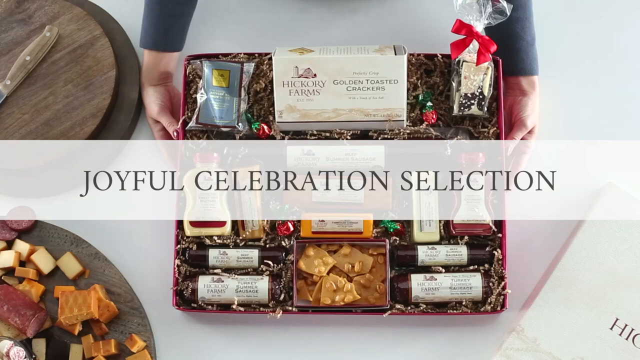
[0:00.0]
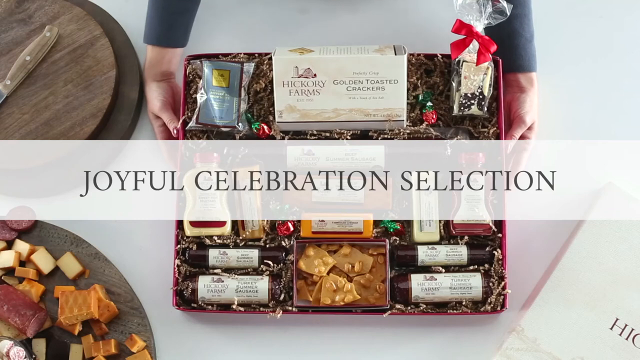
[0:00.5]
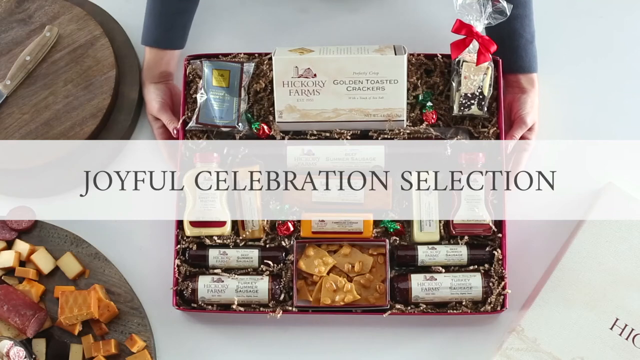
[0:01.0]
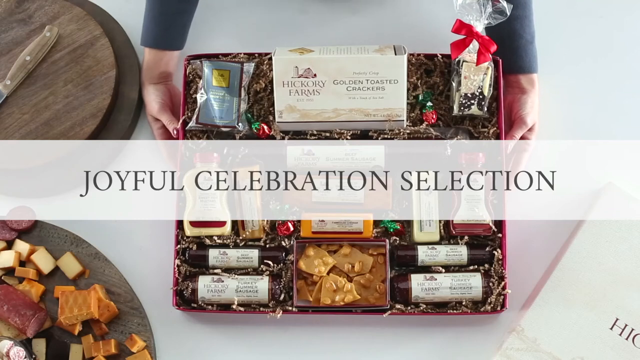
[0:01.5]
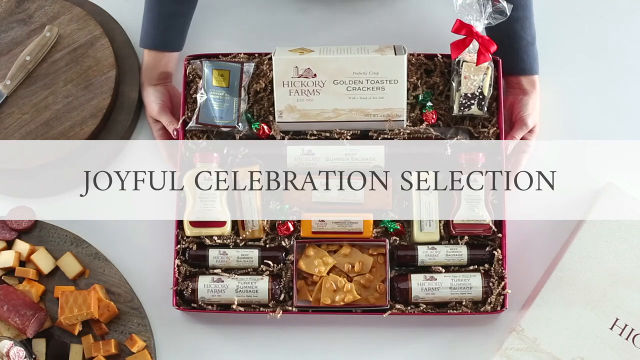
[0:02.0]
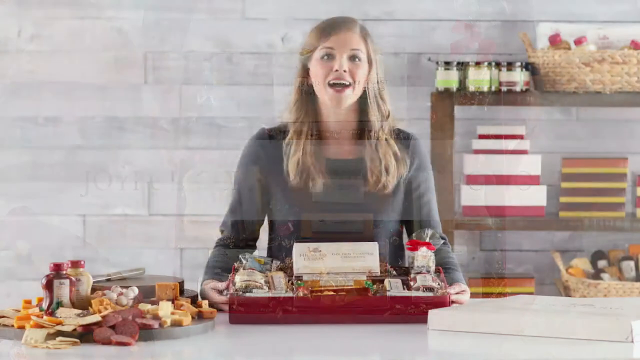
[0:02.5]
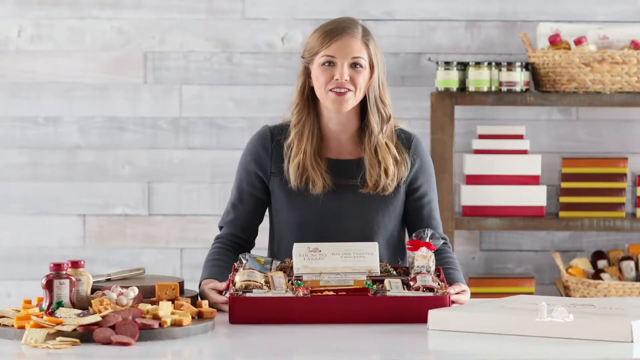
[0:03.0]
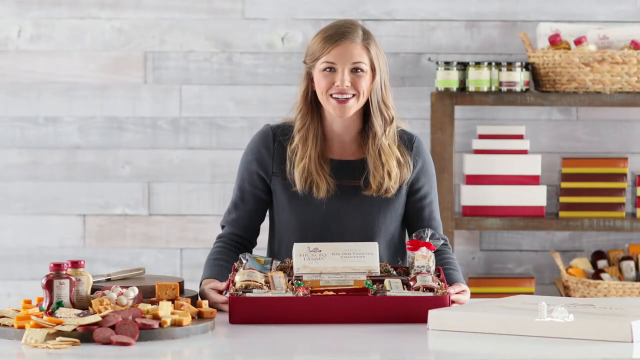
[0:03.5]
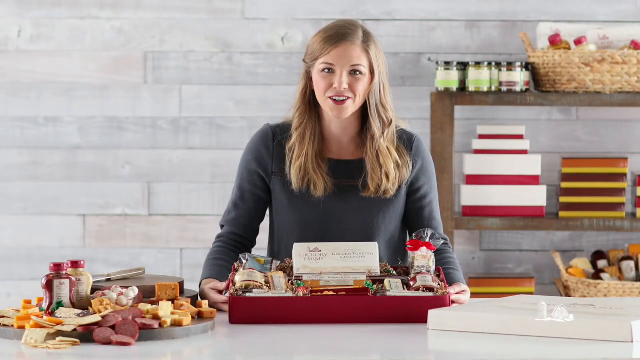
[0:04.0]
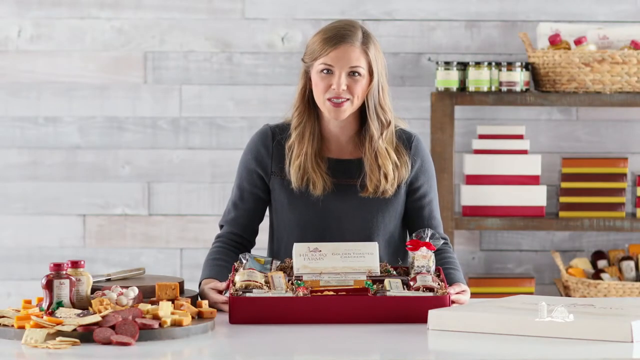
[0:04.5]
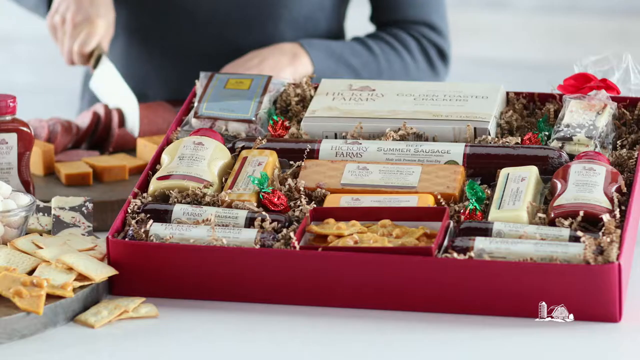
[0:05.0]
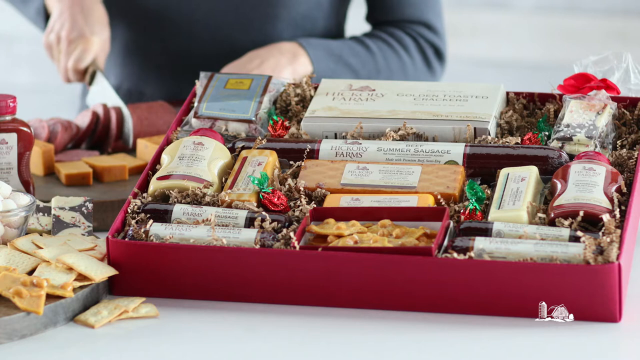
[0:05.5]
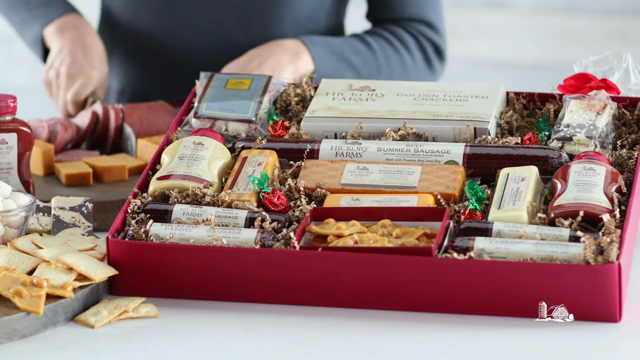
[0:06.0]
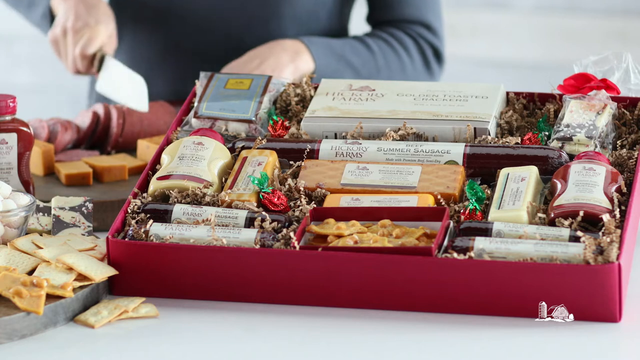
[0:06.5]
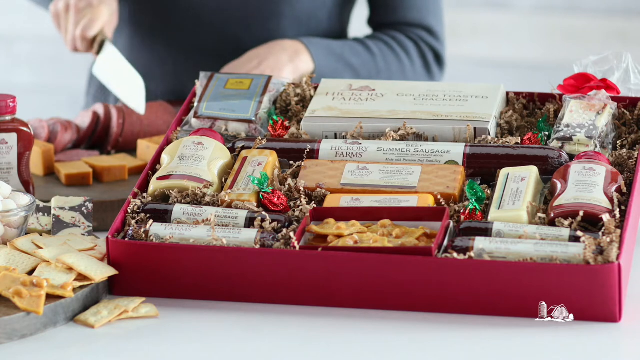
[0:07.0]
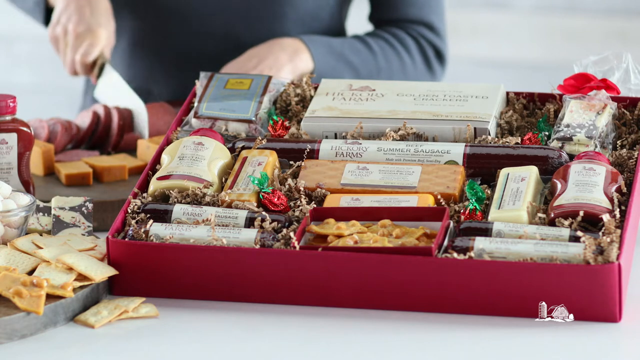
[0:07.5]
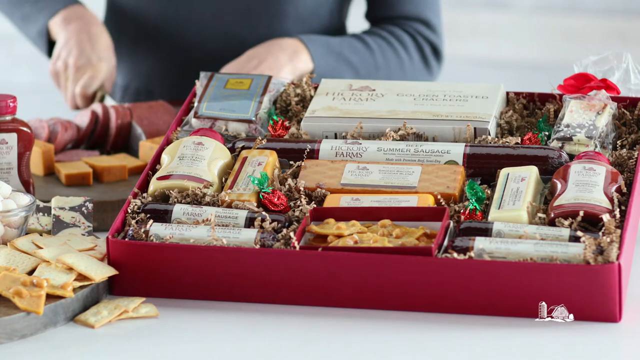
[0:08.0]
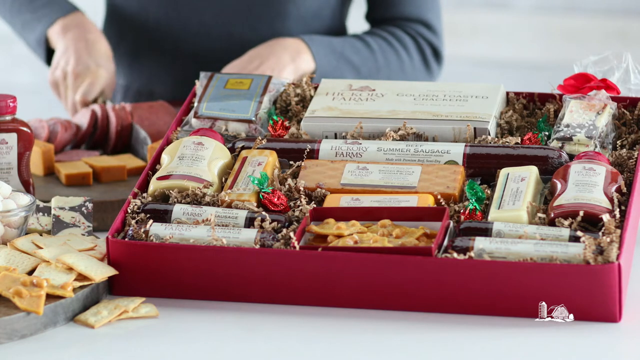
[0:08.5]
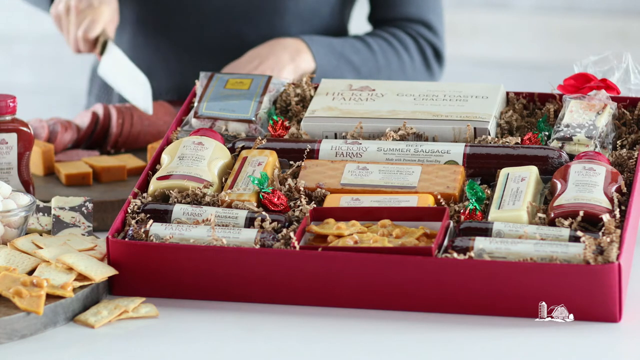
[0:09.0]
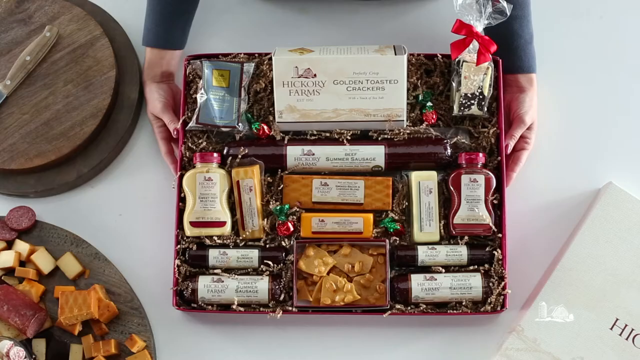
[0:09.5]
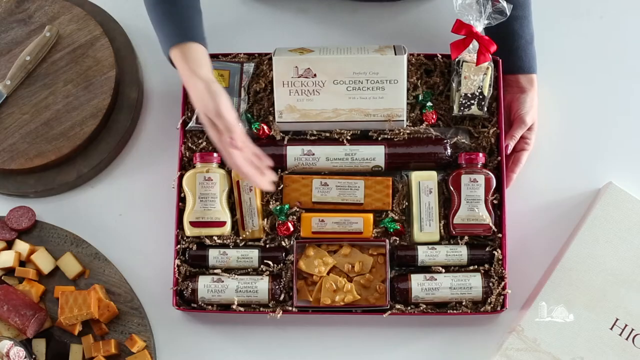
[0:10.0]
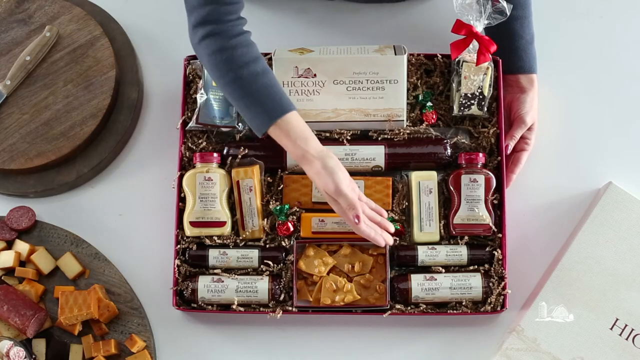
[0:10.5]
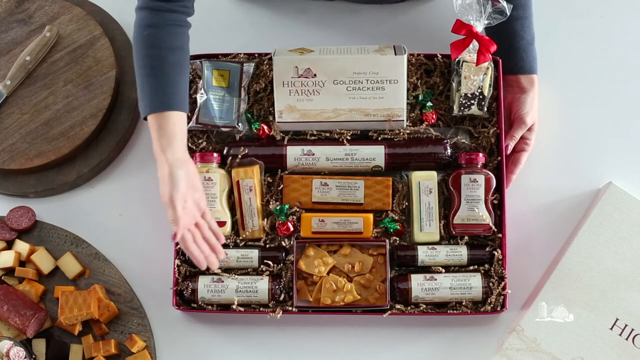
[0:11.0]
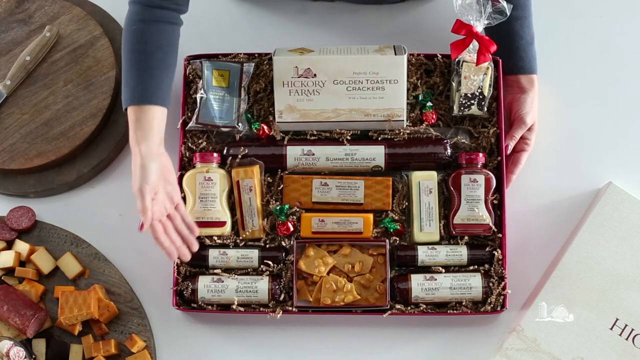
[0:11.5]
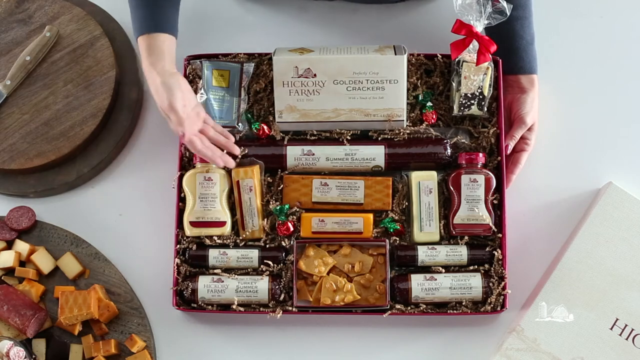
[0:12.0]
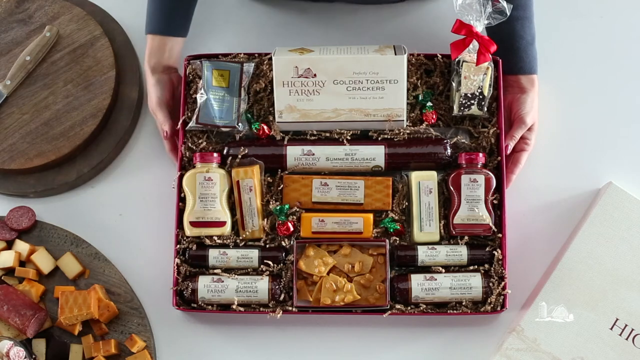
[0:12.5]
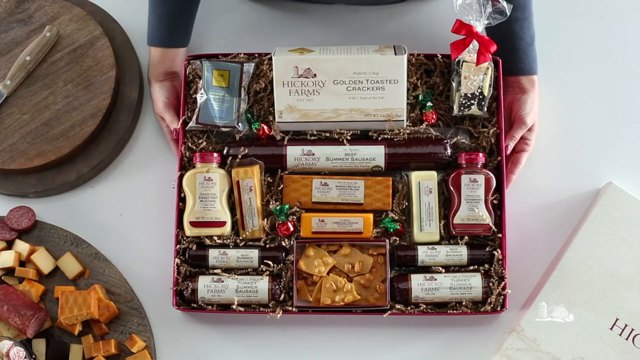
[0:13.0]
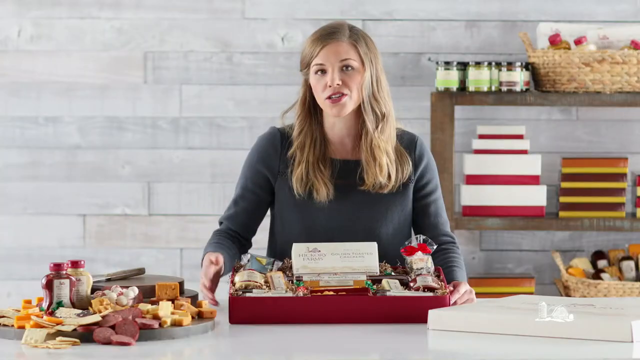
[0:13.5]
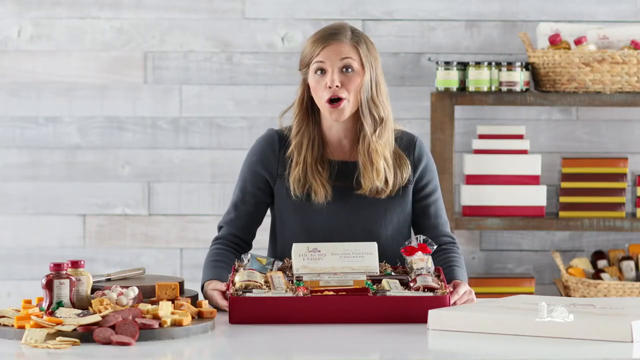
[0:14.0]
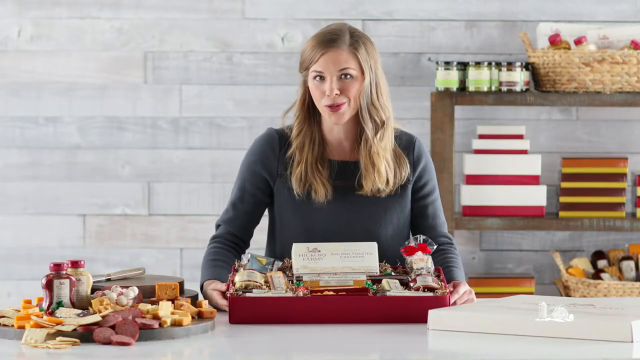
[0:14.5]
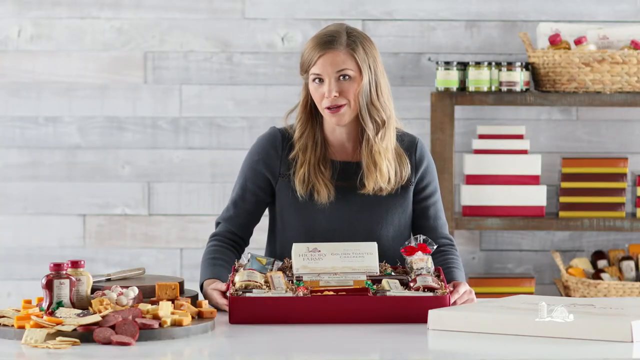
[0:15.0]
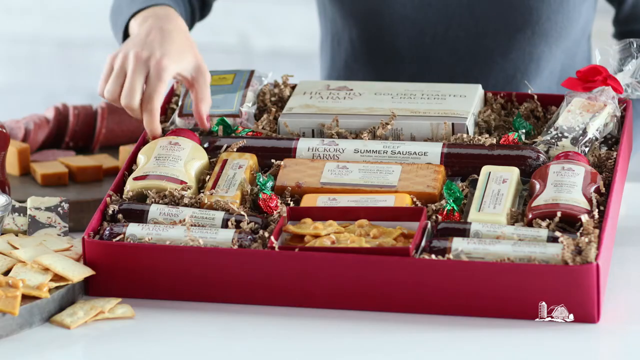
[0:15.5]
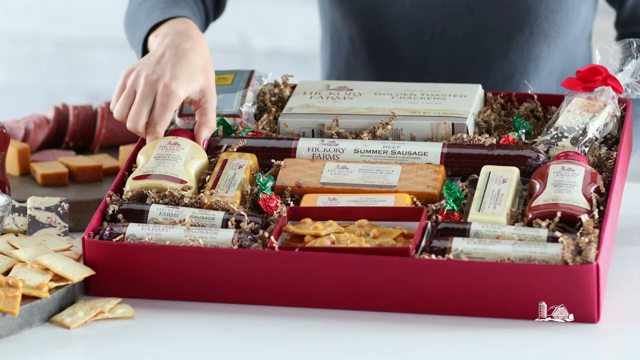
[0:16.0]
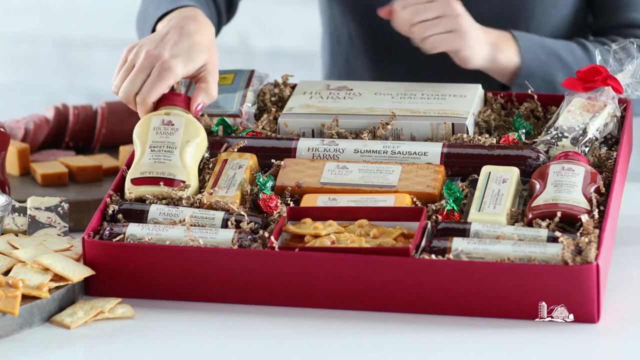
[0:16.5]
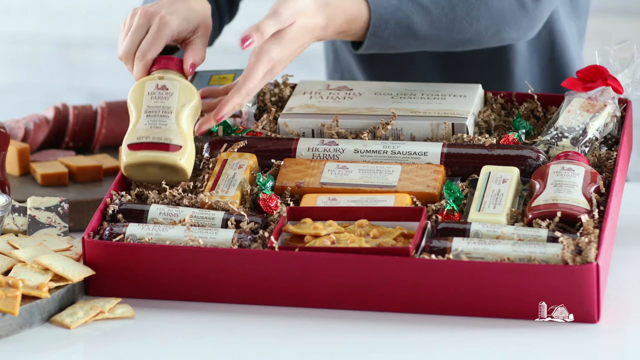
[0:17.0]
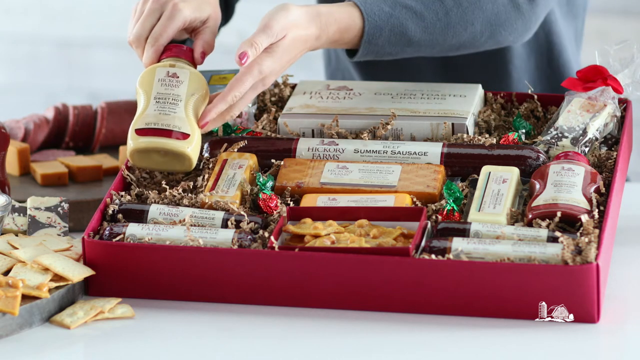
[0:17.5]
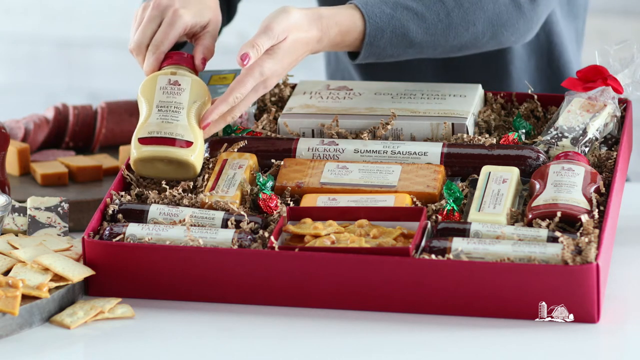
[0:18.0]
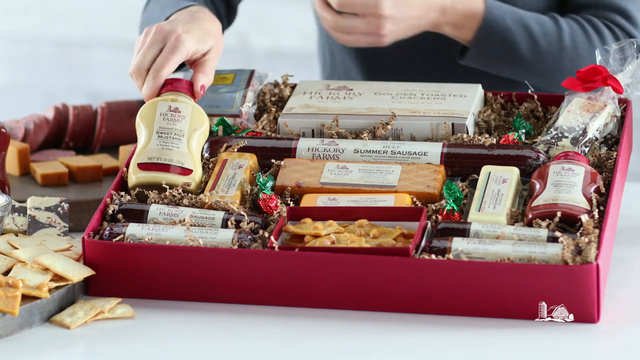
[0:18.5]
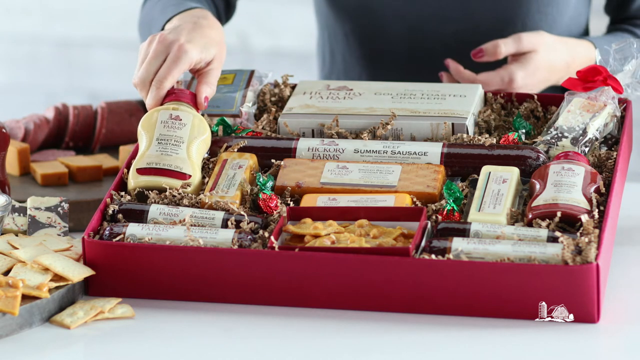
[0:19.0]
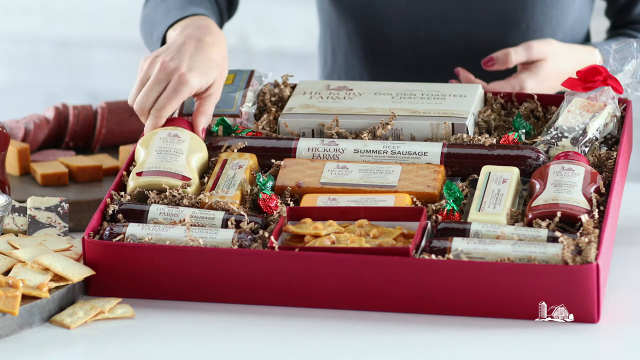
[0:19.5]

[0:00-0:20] A package bearing the name Joyful Celebration Selection appears. A woman puts together presents, food and cakes, arranging presents in a gift box. She cuts and slices sausages and other products, and these are all arranged in the box.